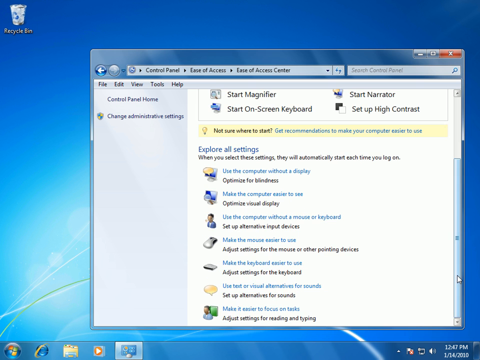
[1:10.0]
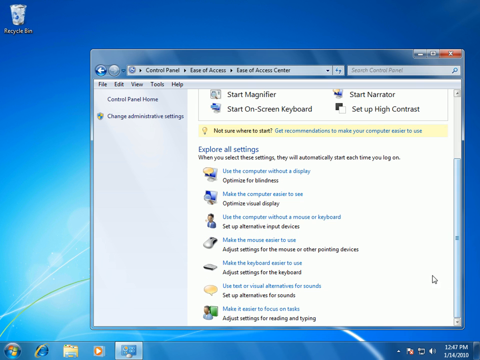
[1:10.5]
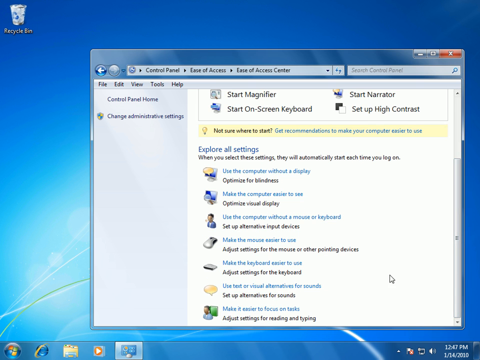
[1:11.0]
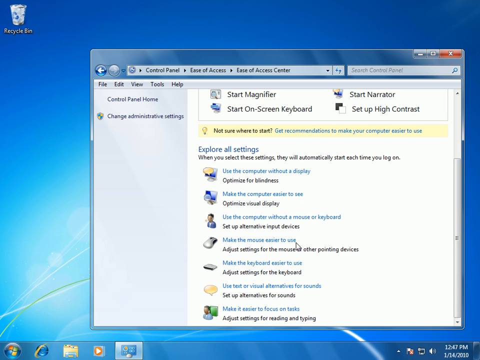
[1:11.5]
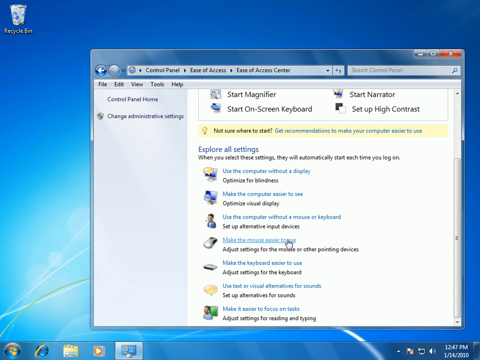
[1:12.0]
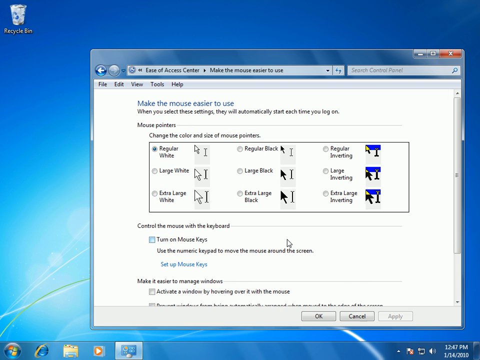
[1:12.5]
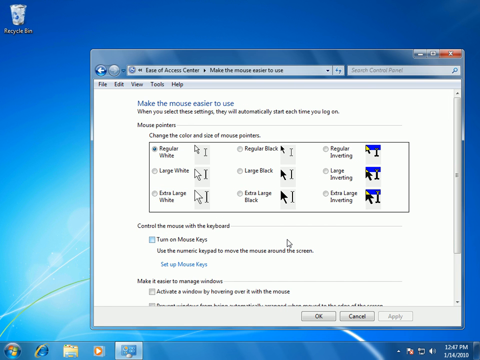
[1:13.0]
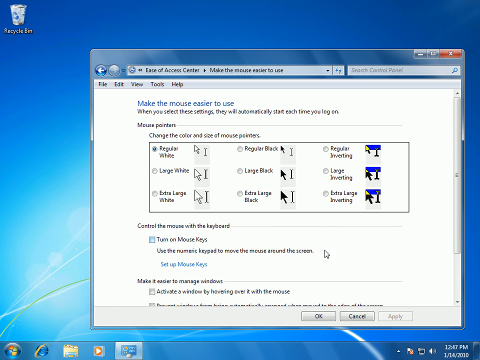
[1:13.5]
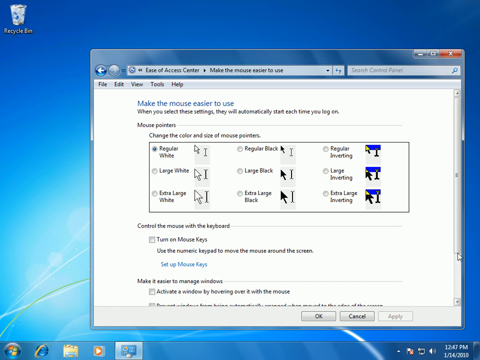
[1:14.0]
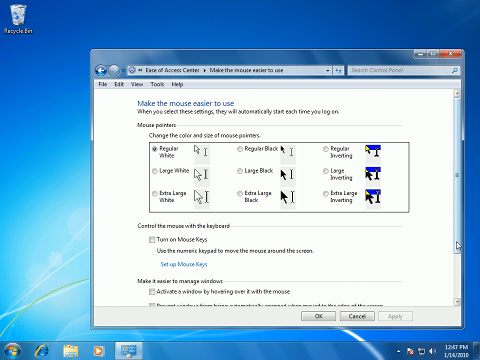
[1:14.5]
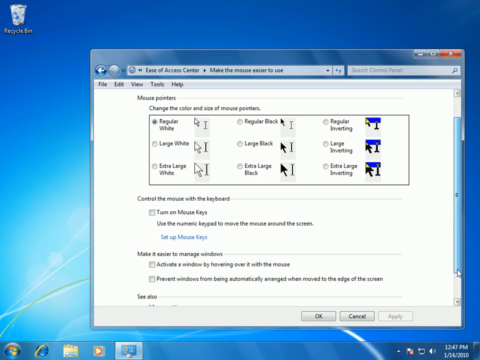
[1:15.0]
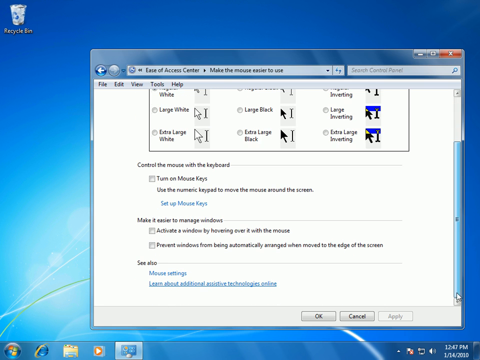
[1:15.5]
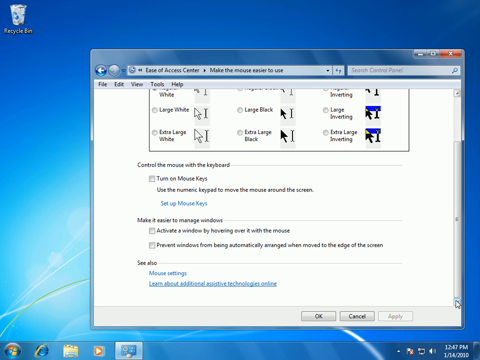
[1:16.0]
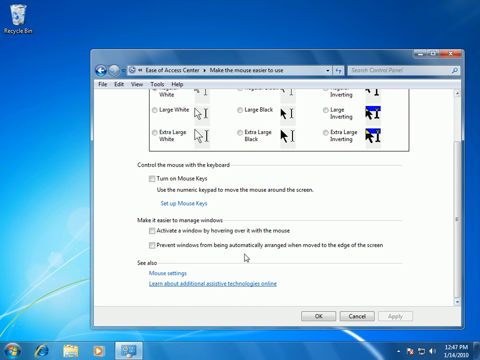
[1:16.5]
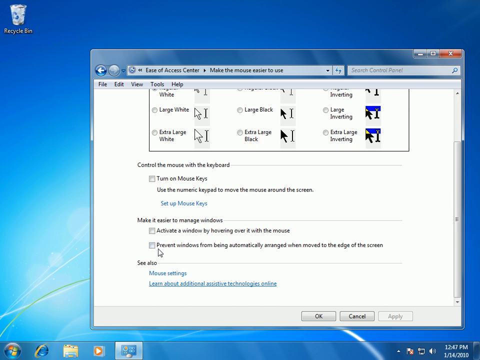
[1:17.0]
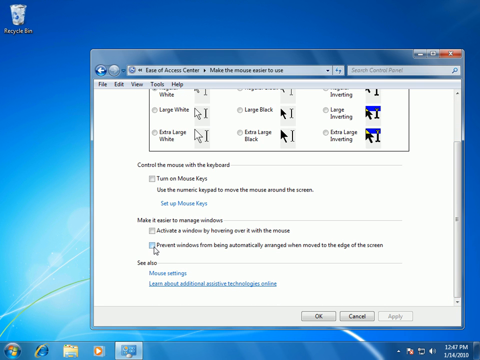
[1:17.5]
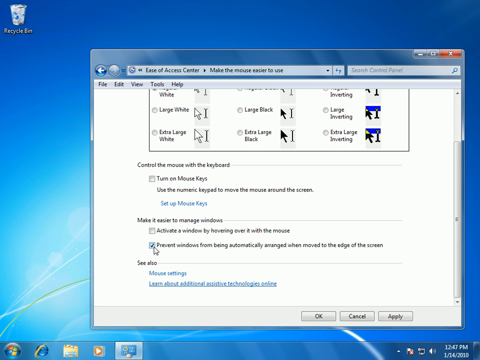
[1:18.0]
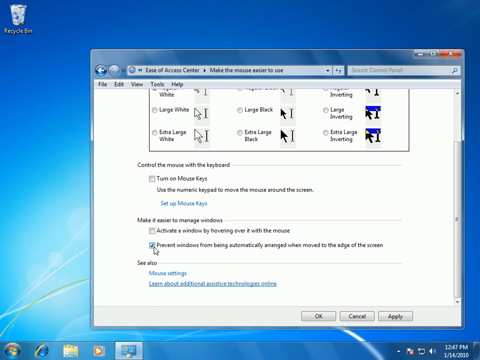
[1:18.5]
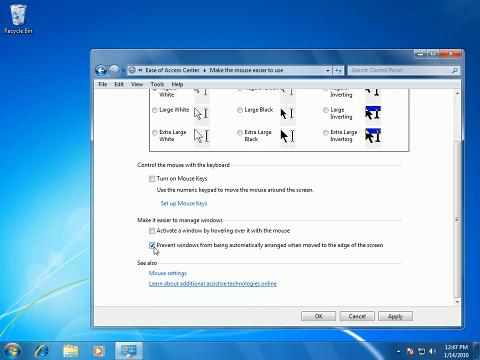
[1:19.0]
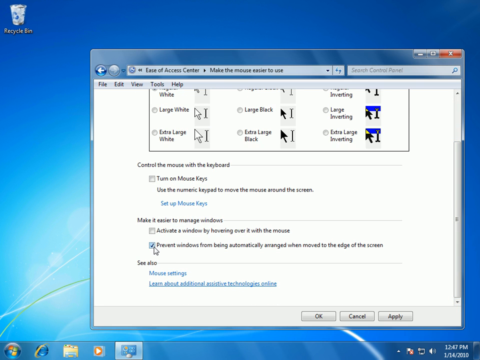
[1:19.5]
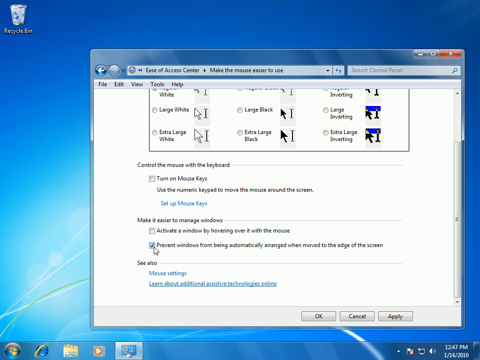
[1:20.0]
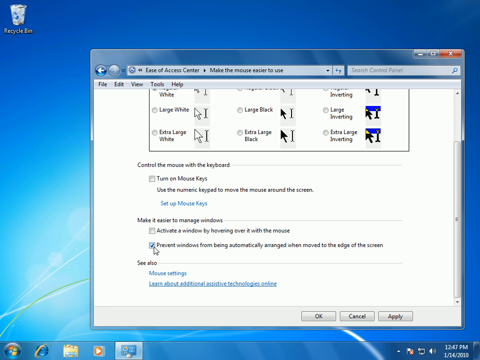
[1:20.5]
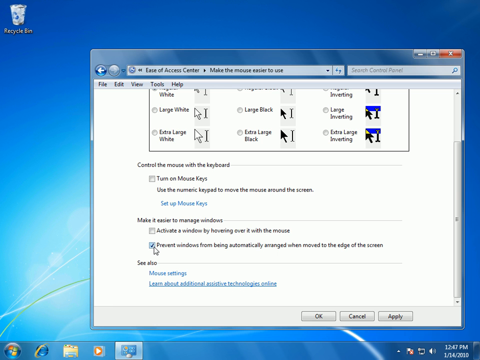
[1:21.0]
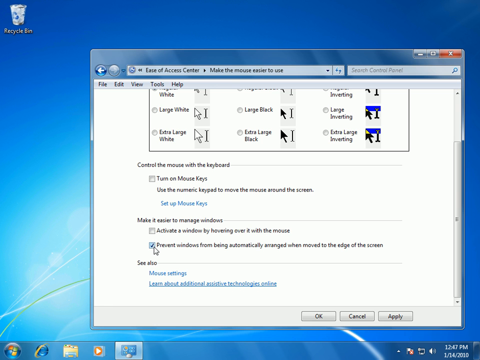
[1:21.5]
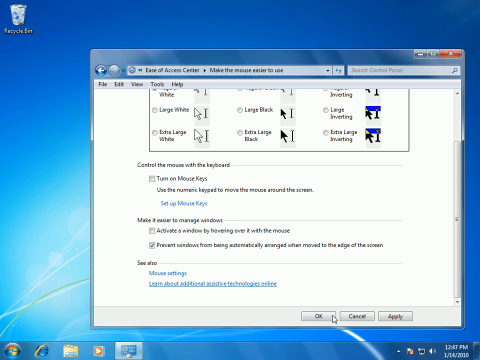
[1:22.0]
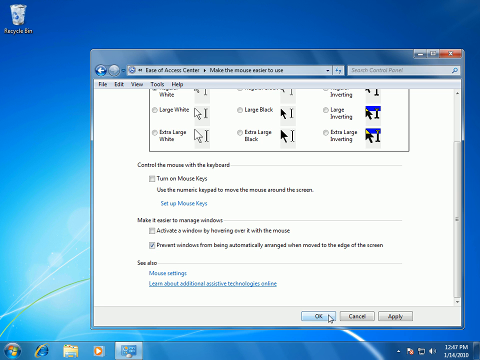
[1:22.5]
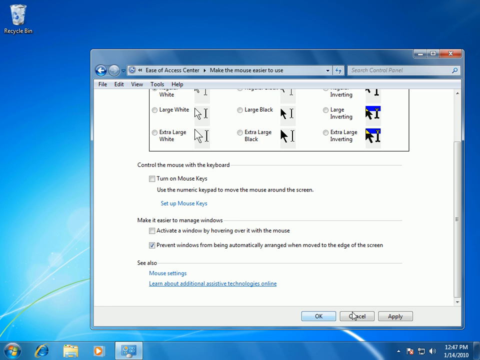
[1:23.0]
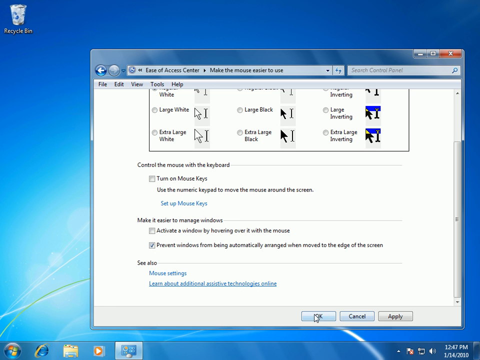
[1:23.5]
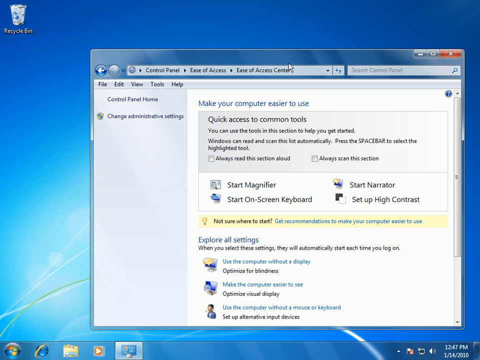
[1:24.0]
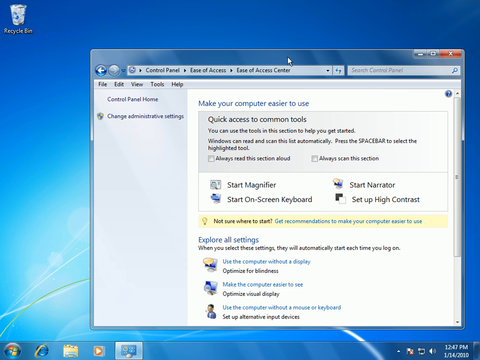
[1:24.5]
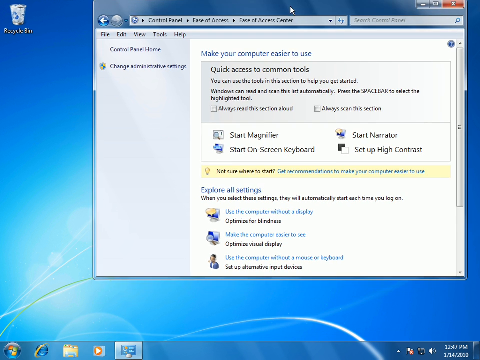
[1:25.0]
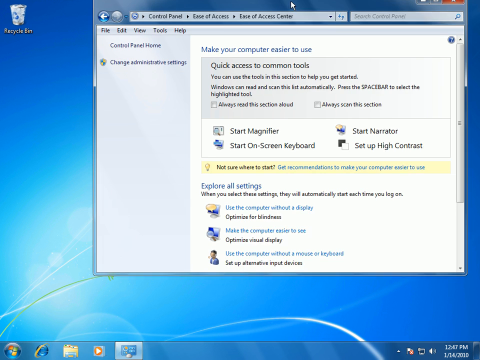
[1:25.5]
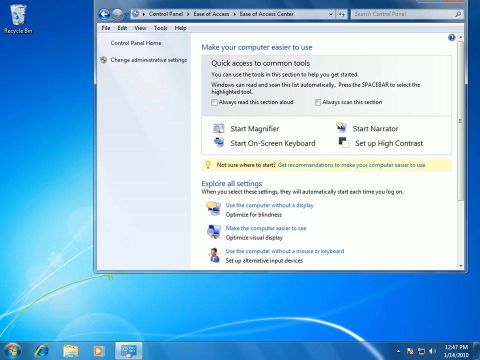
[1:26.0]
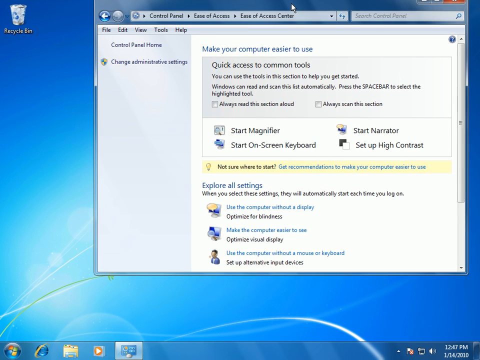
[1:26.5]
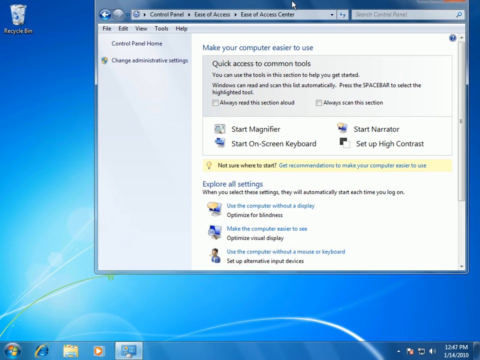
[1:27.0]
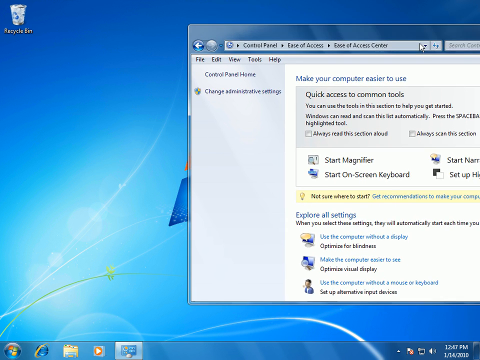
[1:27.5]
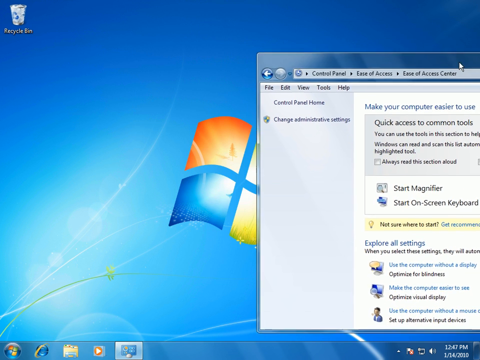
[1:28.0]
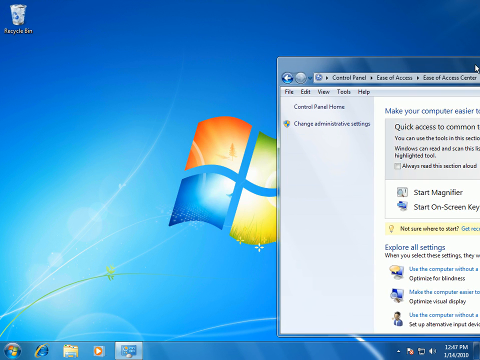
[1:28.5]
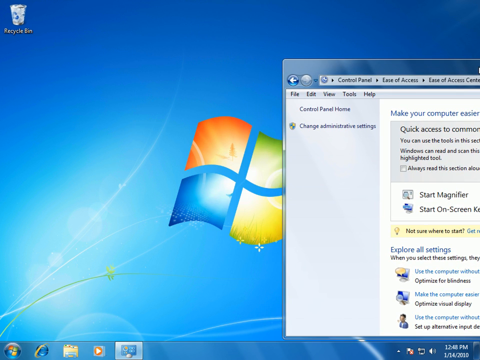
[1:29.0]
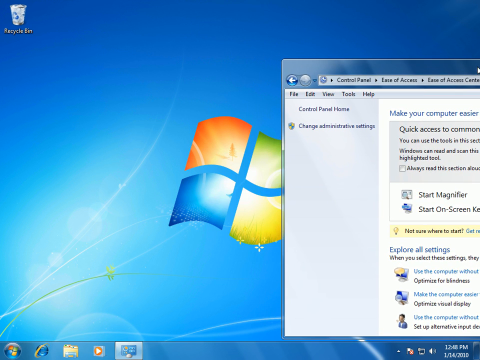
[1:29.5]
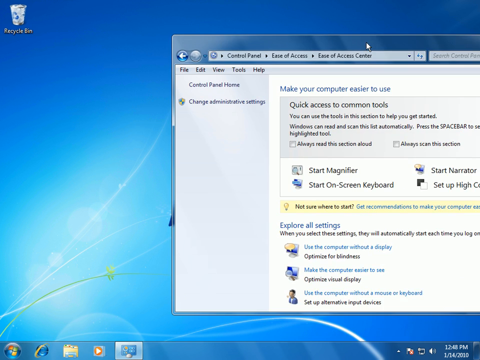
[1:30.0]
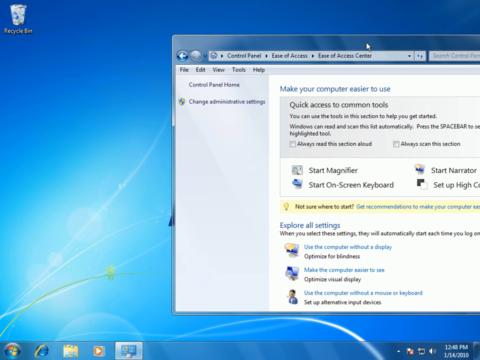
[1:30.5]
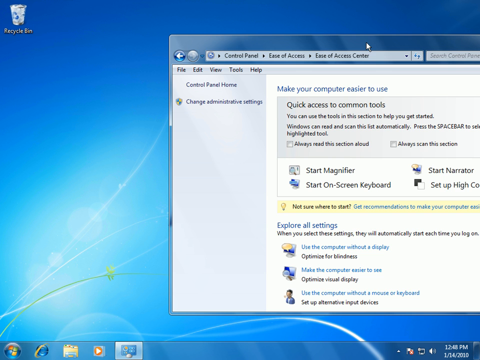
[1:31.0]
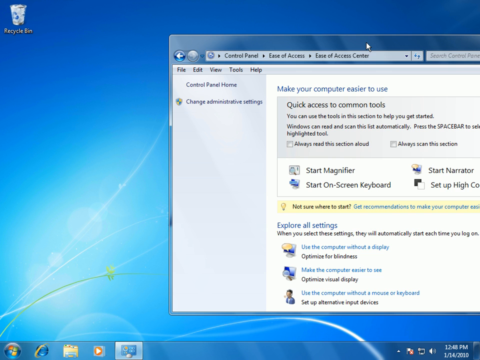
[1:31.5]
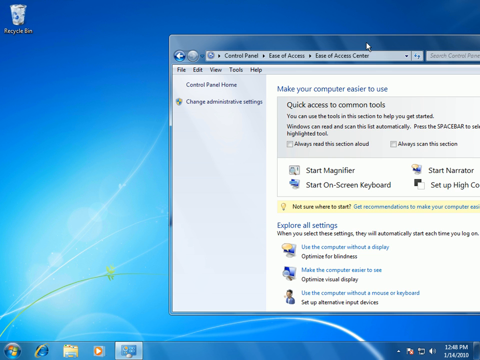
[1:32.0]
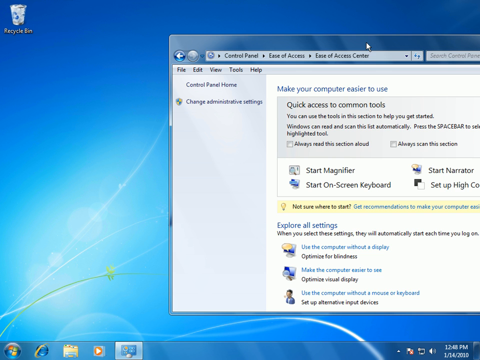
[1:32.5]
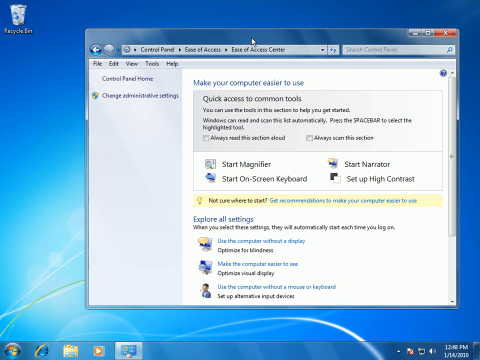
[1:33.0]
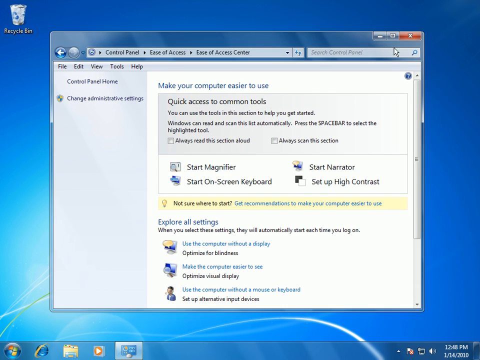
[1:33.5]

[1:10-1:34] At the bottom of the screen is the option to make the mouse easier to use, which the cursor clicks. A new screen opens reading "make the mouse easier to use. When you select these settings, they will automatically start each time you log on." There are three columns of mouse settings, and above them it reads "these change the color and size of mouse pointers." The page is scrolled to the bottom and a checkbox for "prevent windows from being automatically arranged when moved to the edge of the screen" is clicked, which seems related to the two windows from the start of the video. OK is clicked at the bottom, and the window is moved up to align more with the top of the screen, then all the way to the right, kind of back over. It is moved back and forth a few times after the mouse settings are changed, possibly to demonstrate the changed settings.